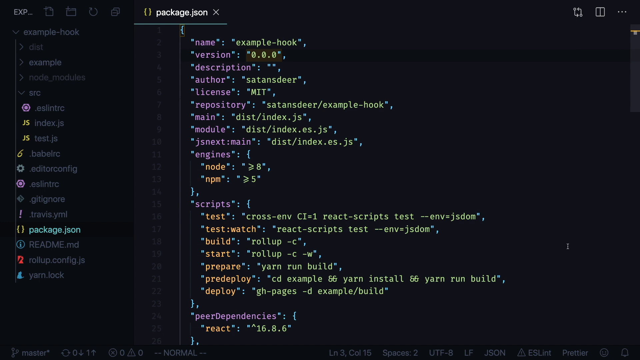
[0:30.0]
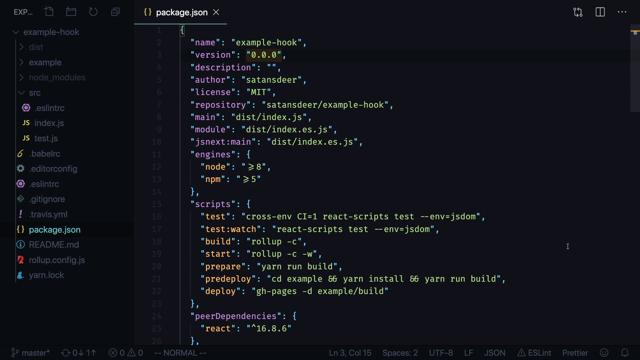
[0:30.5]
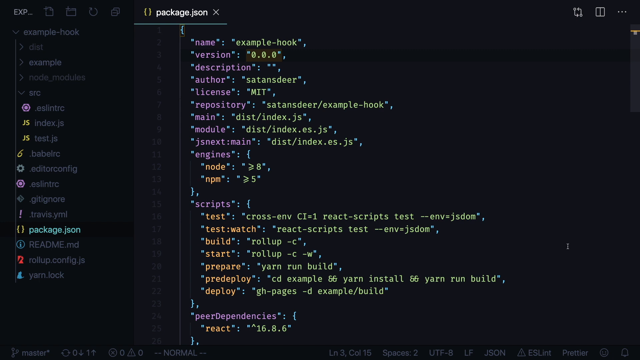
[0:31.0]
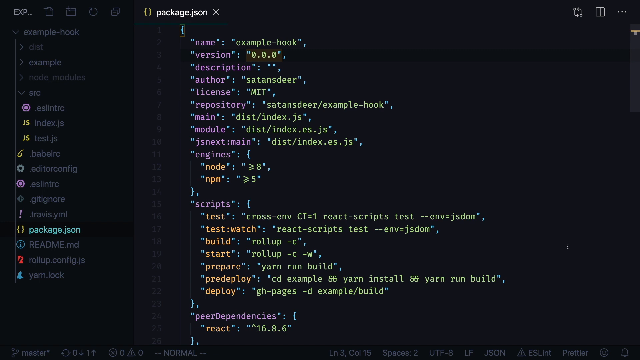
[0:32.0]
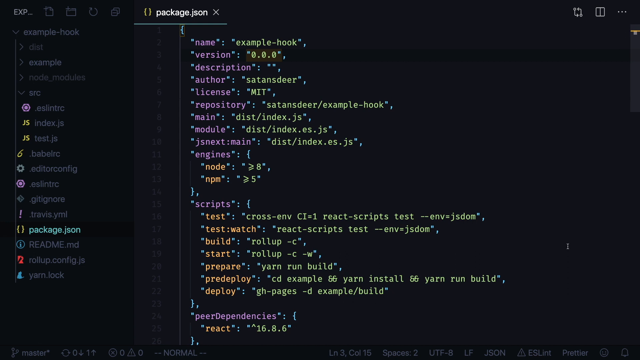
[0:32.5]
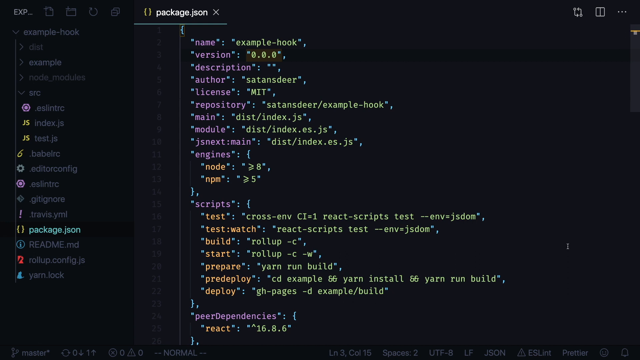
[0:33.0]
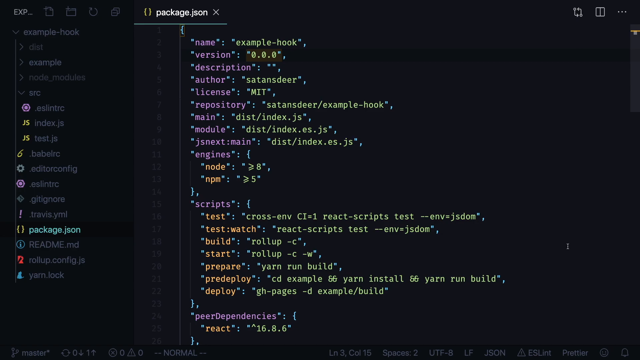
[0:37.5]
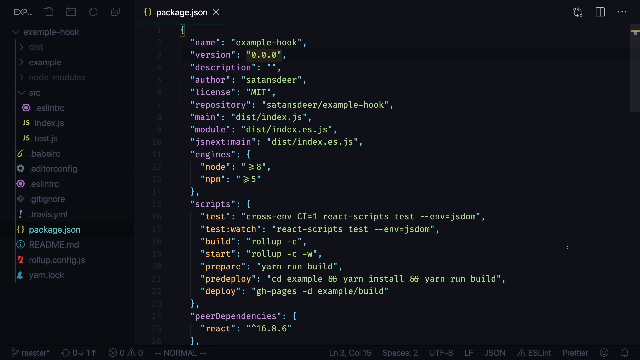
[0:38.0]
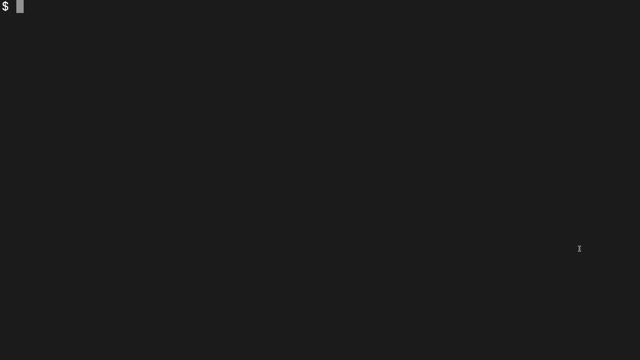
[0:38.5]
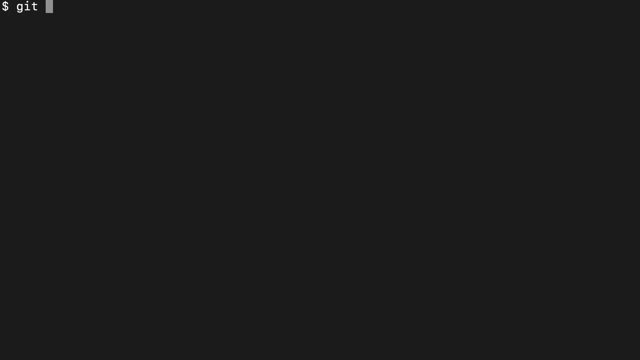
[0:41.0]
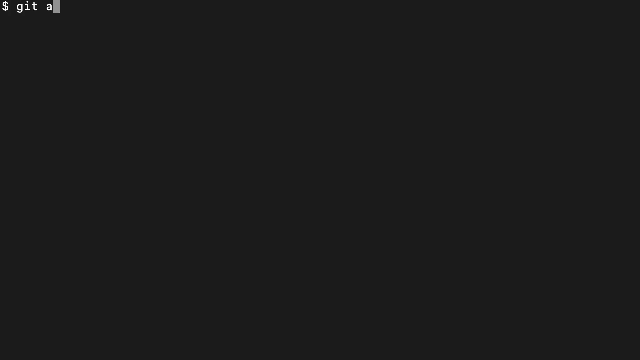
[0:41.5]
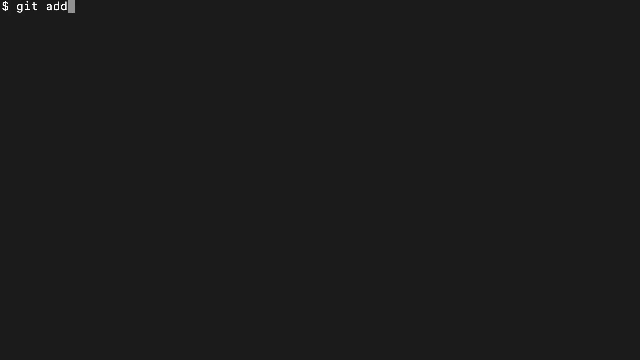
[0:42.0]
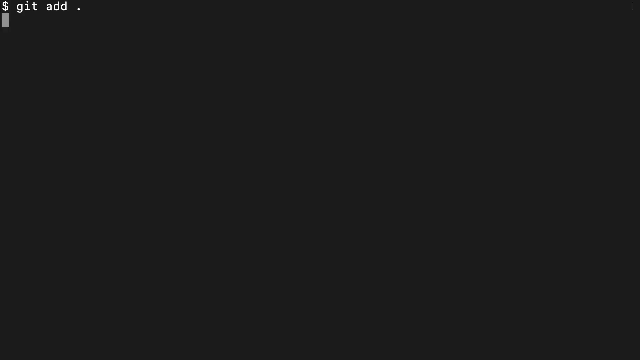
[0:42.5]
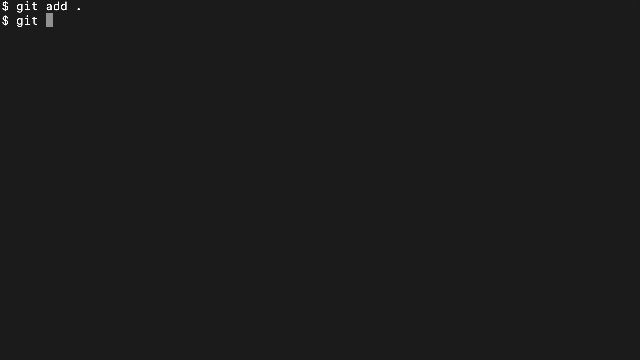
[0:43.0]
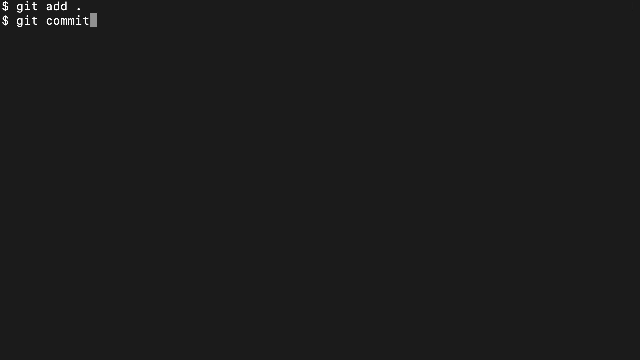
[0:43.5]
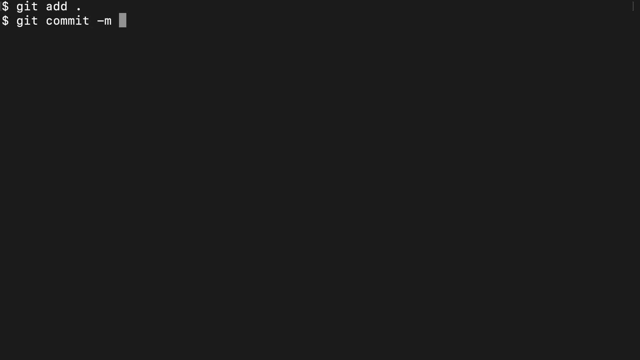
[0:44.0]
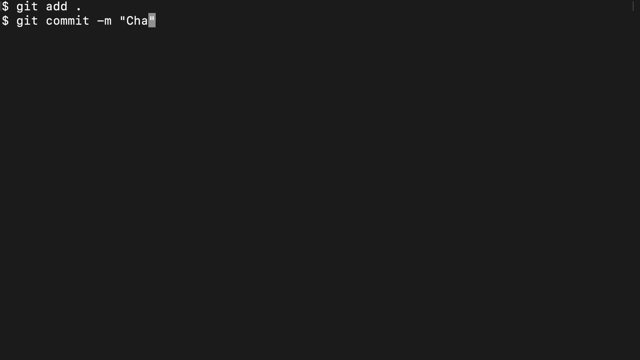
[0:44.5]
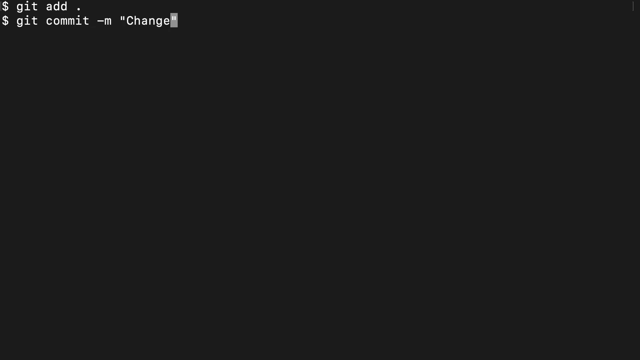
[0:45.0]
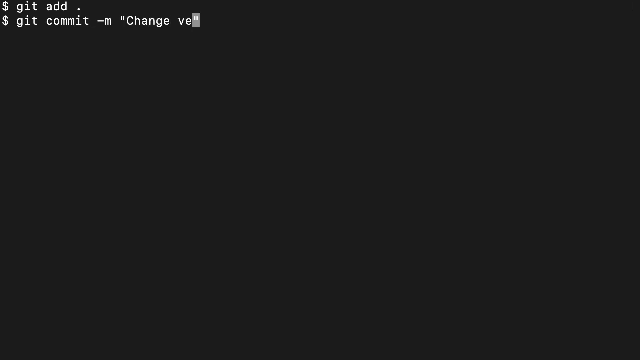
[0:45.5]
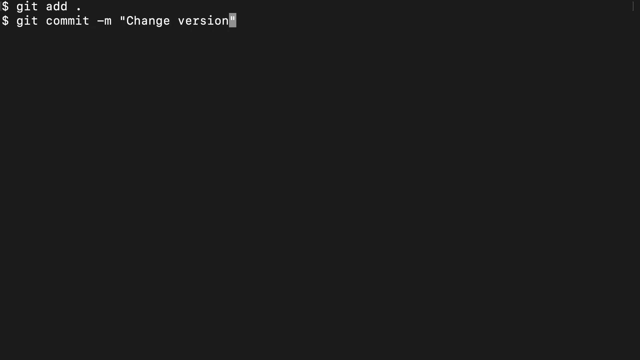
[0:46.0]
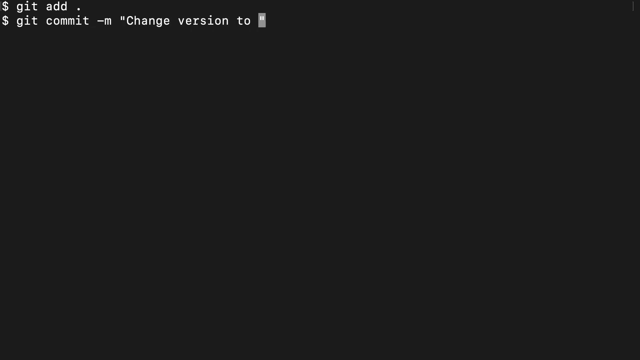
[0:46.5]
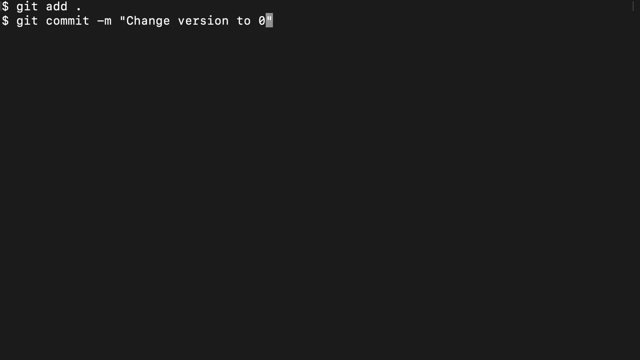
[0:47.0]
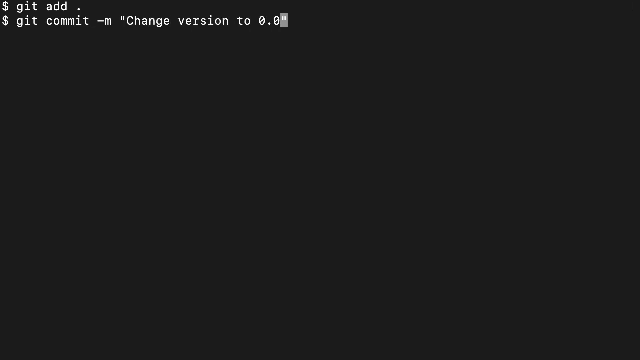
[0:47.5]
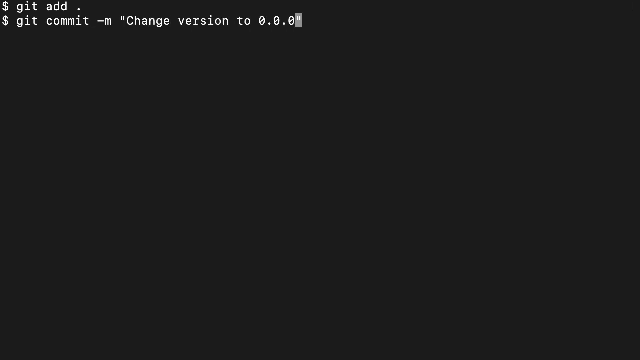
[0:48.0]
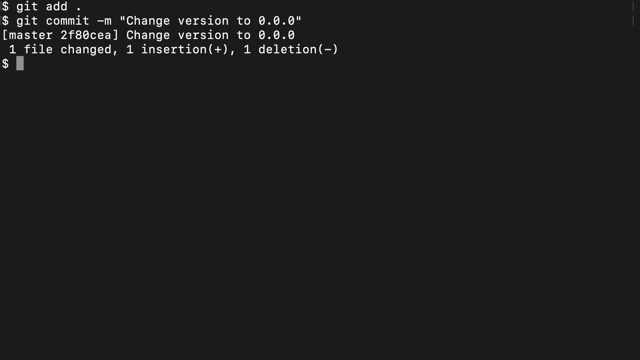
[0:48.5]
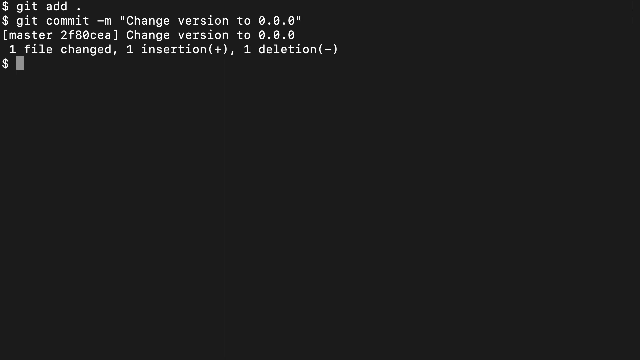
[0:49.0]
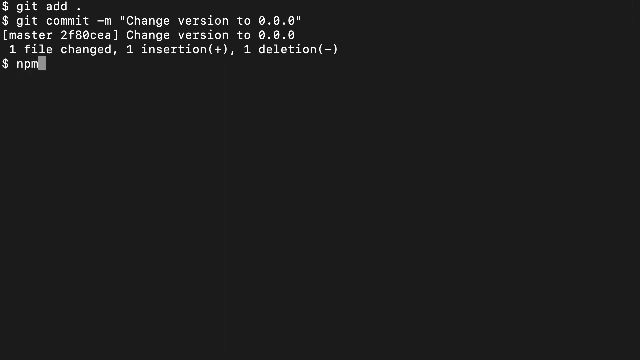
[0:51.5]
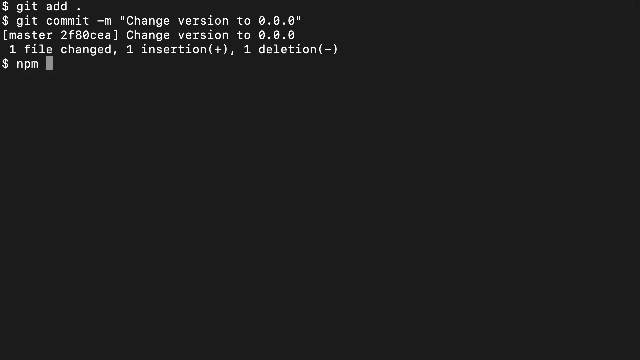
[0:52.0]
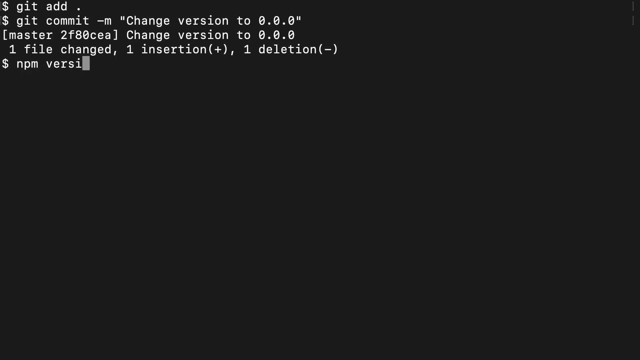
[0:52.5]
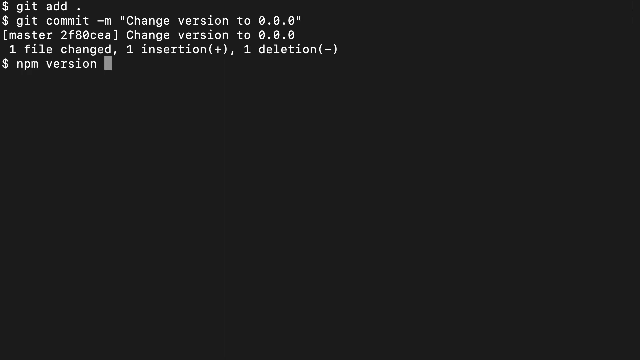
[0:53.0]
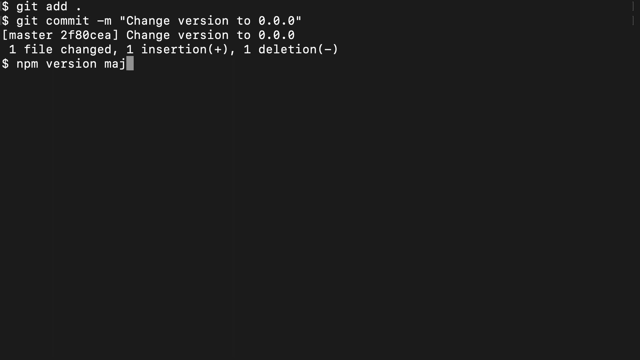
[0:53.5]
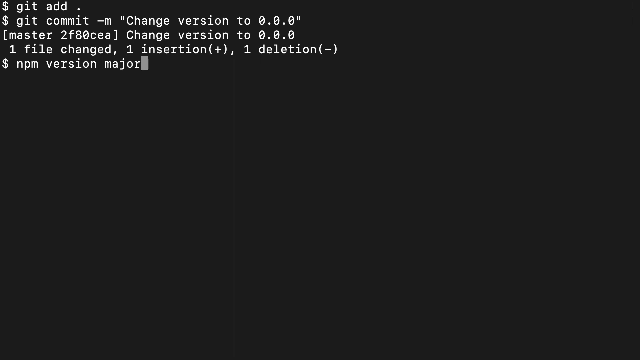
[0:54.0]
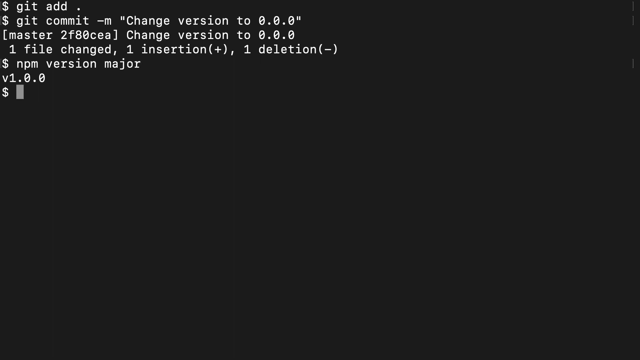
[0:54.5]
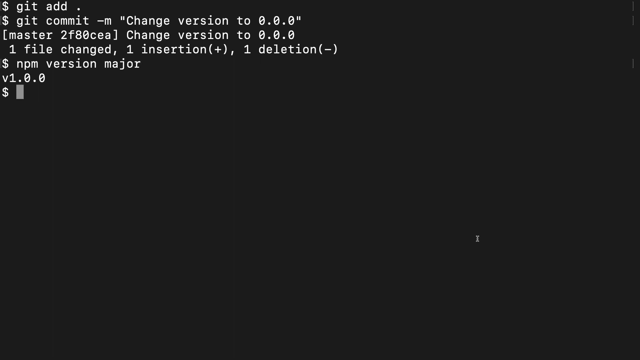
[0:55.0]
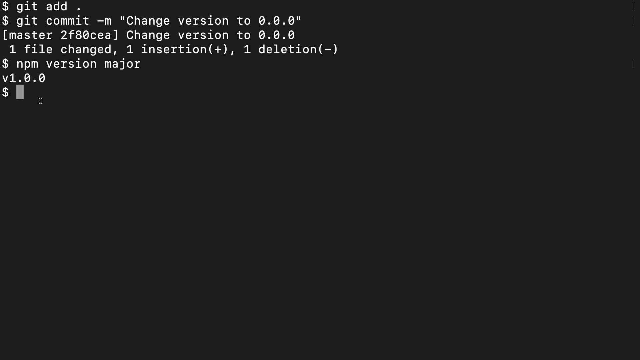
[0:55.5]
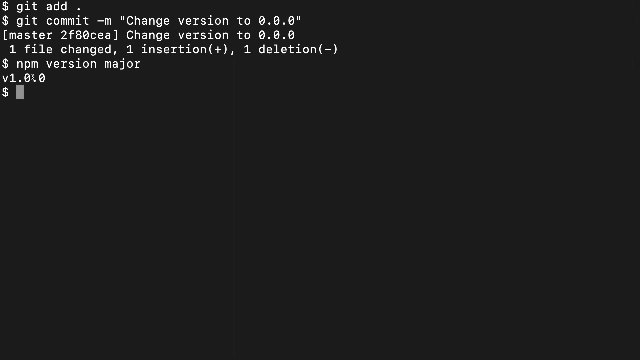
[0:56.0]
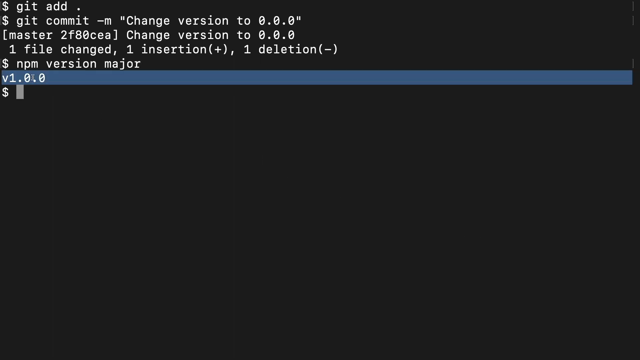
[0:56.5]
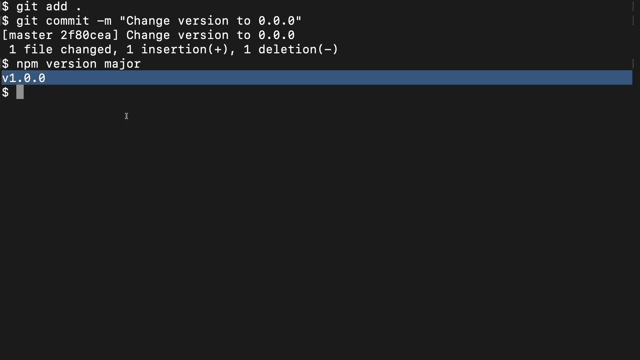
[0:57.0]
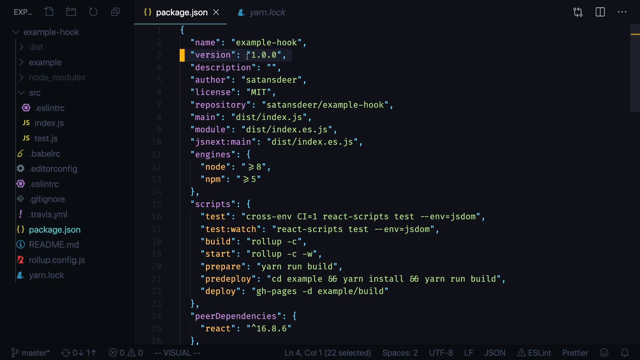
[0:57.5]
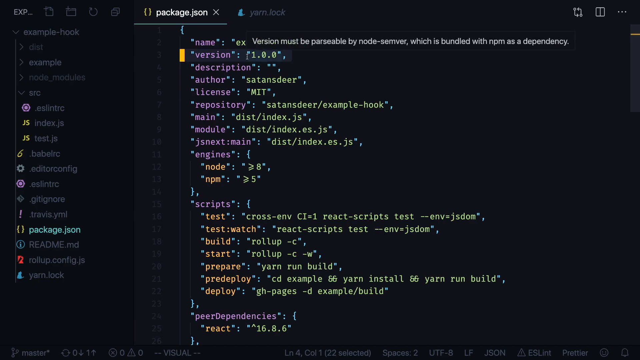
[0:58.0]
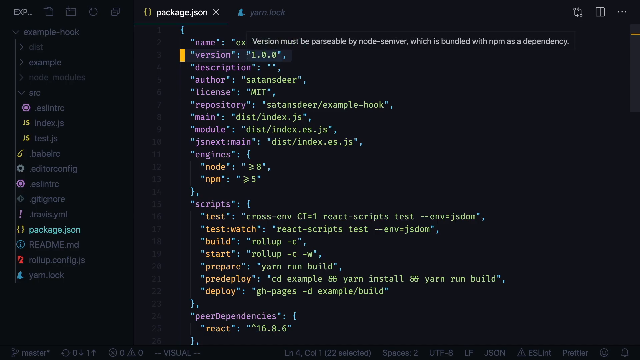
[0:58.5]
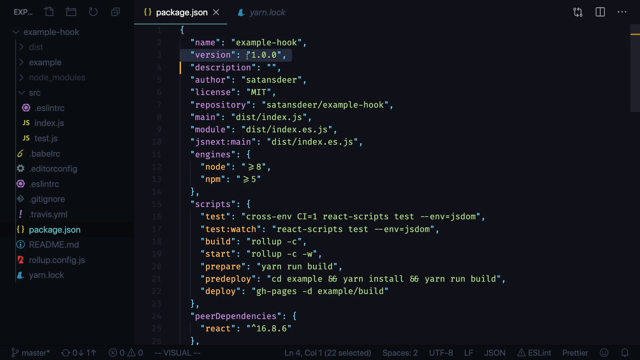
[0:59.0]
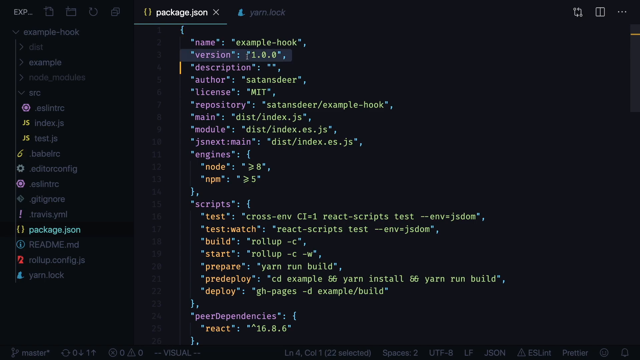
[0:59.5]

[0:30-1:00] A black screen shows purple, green and orange text, apparently lines of code, under a white title at the top reading "package.json", with a drop-down menu of gray text on the left. The screen then changes to black with a white dollar sign in the top left corner. Someone types "git add ." and on the next line "$ git commit m change version to 0 0 0", apparently pressing enter, and white text appears underneath: "master 2f80cea change version to 0 0 0 1 file change 1 insertion plus 1 deletion minus". Below that comes "$ npm version major", then "v 1 0 0", then a dollar sign. At the end, the "1.00" is highlighted in blue.